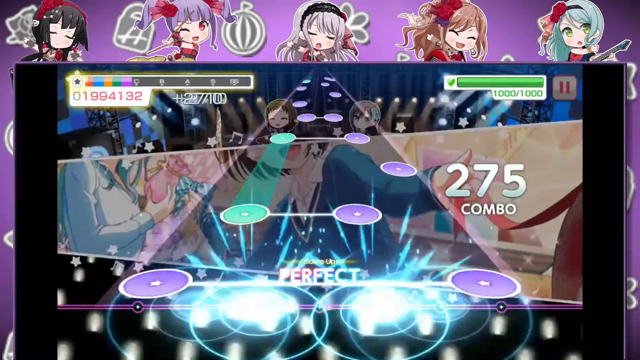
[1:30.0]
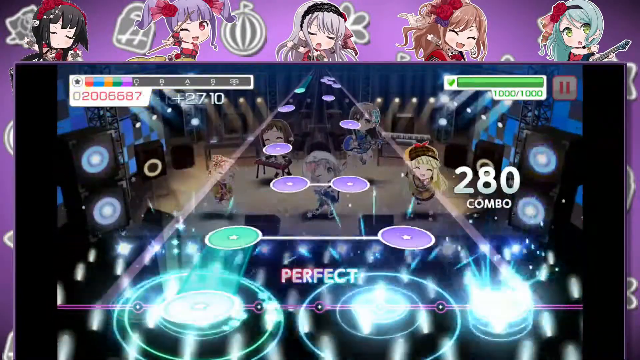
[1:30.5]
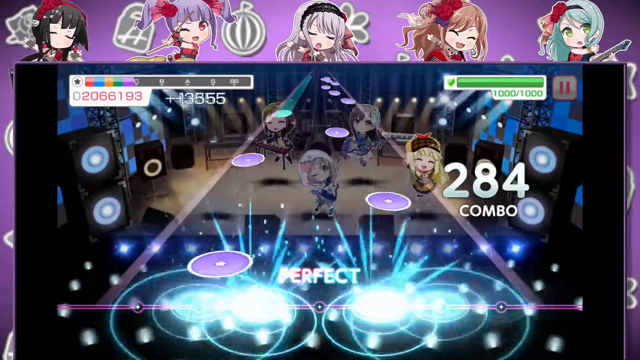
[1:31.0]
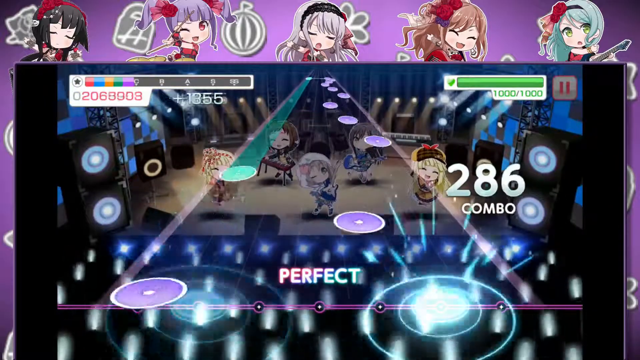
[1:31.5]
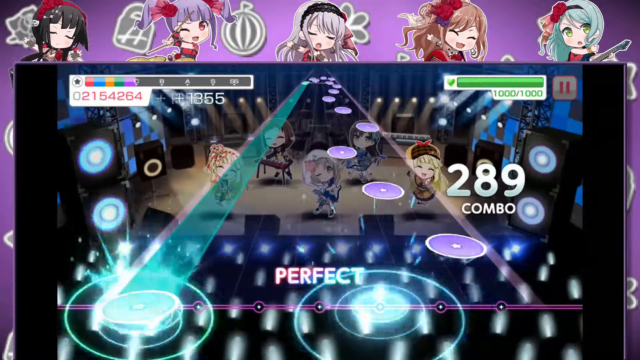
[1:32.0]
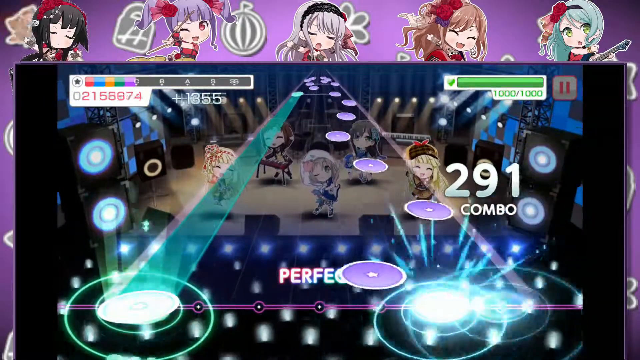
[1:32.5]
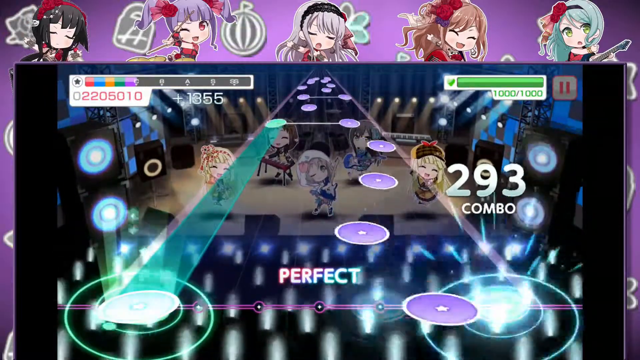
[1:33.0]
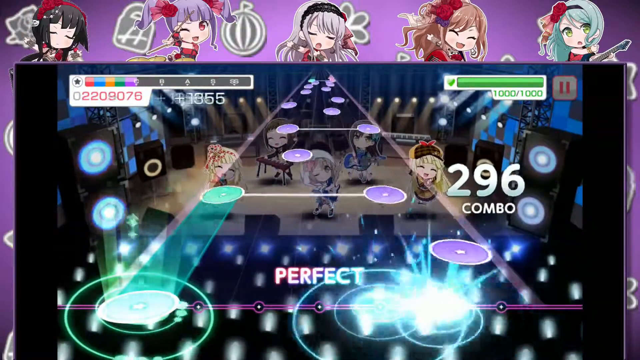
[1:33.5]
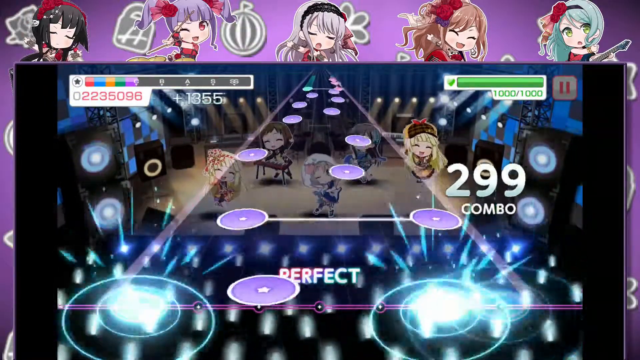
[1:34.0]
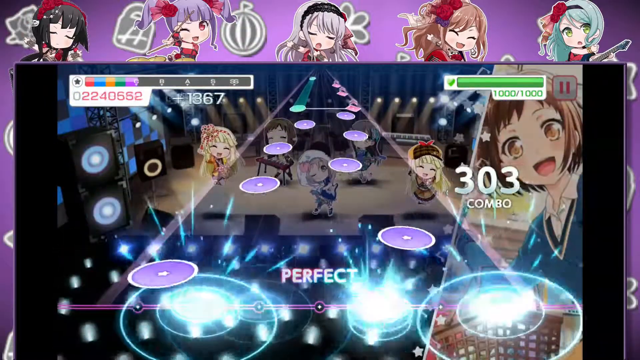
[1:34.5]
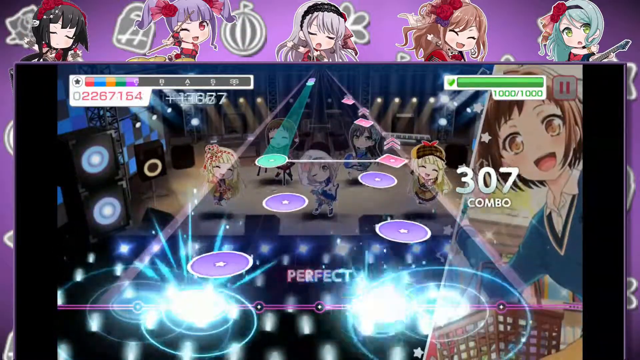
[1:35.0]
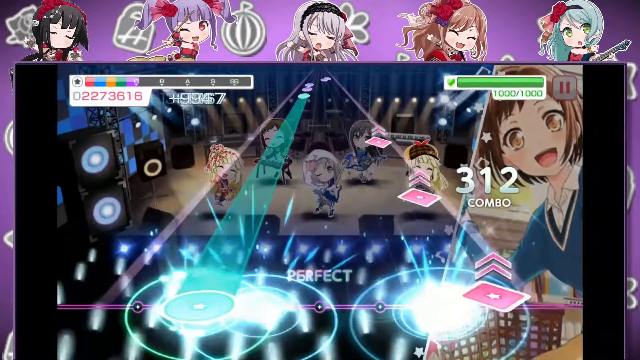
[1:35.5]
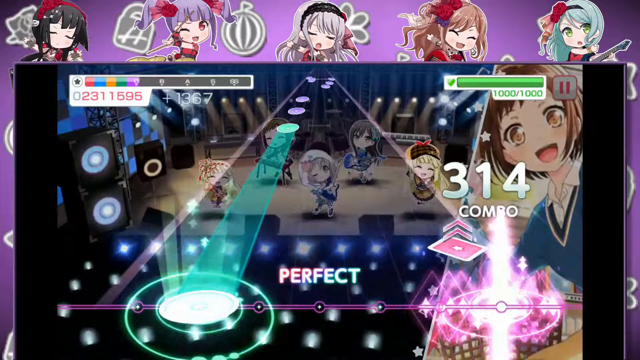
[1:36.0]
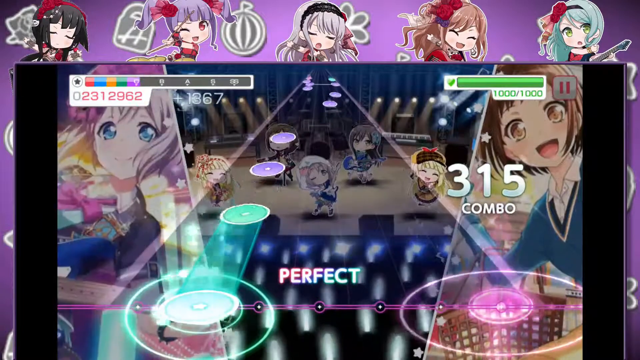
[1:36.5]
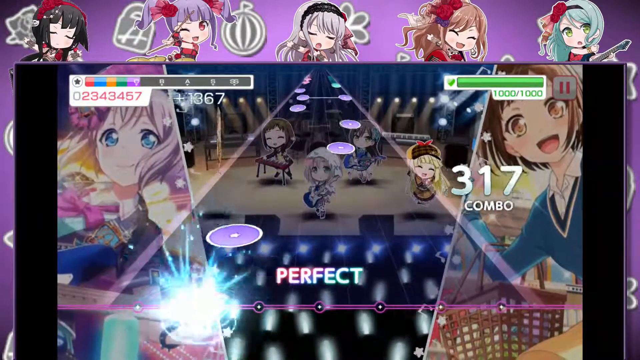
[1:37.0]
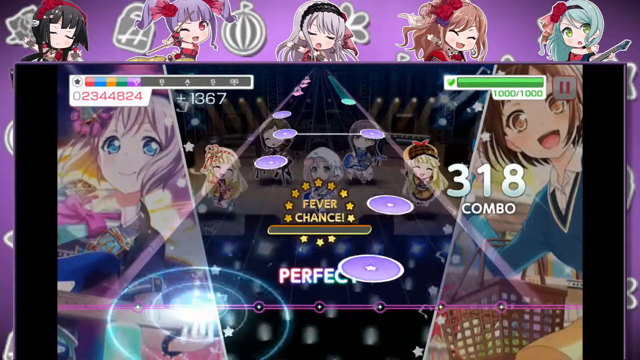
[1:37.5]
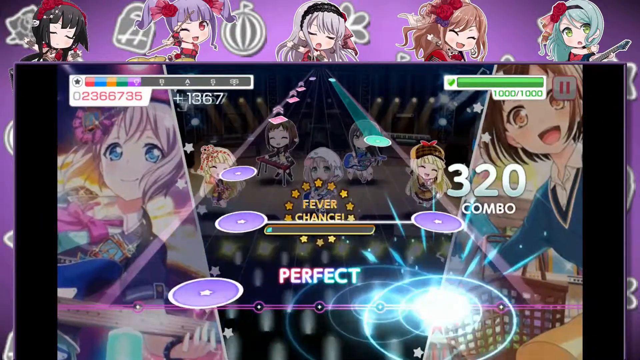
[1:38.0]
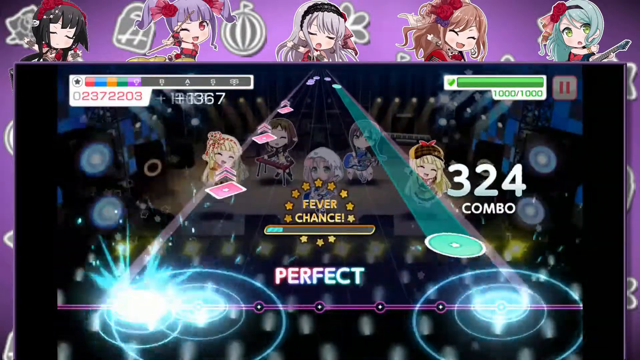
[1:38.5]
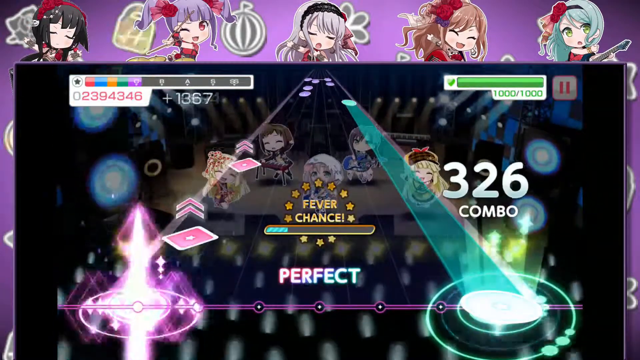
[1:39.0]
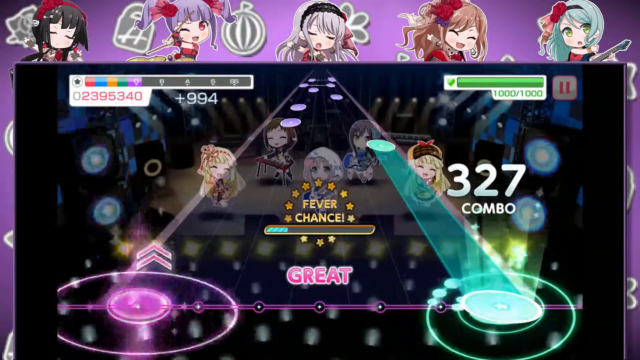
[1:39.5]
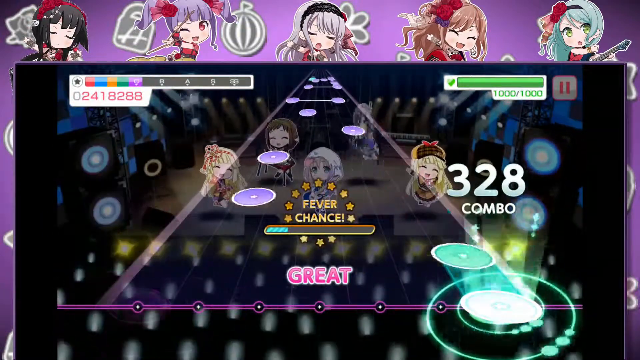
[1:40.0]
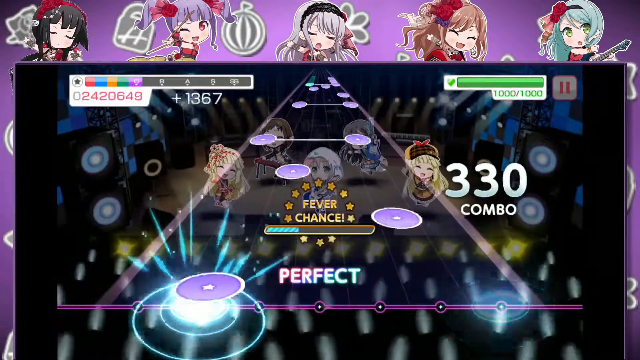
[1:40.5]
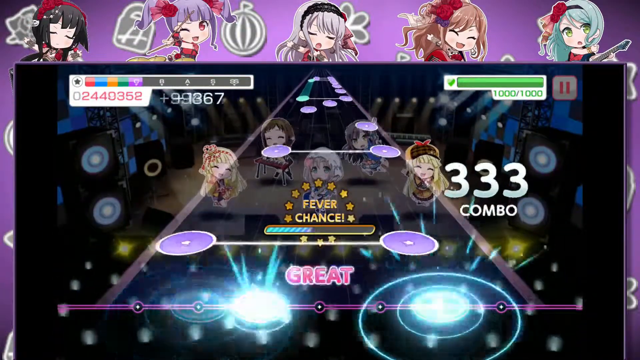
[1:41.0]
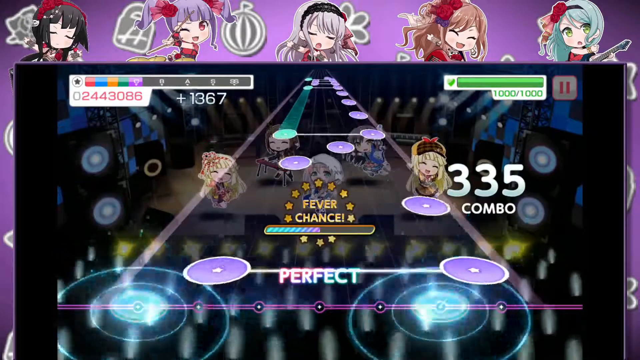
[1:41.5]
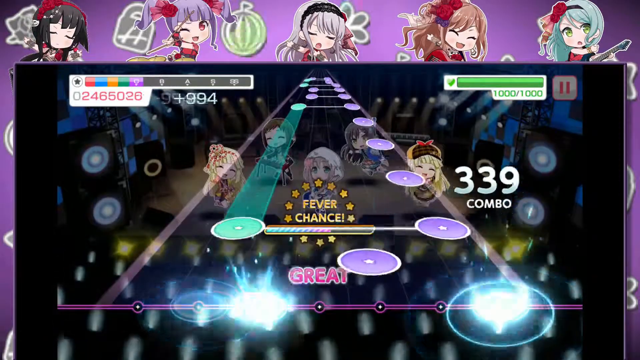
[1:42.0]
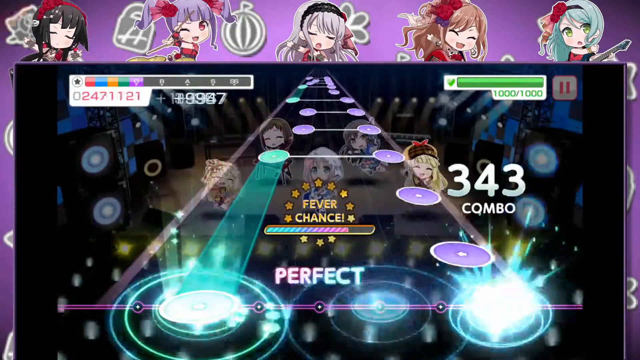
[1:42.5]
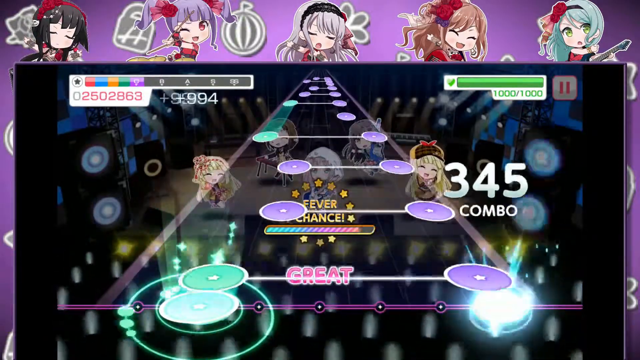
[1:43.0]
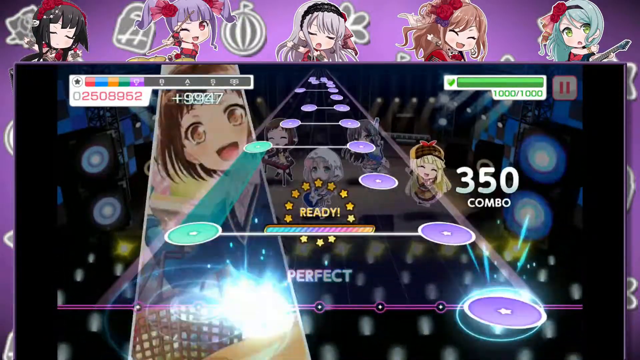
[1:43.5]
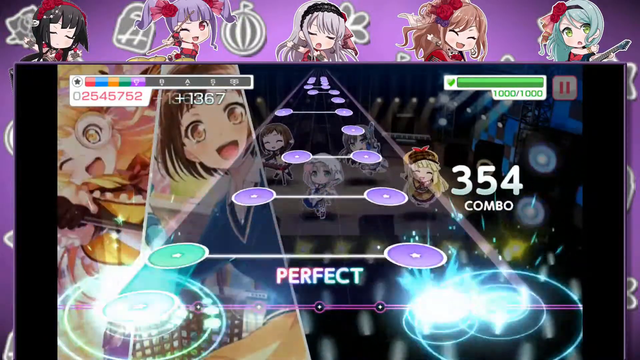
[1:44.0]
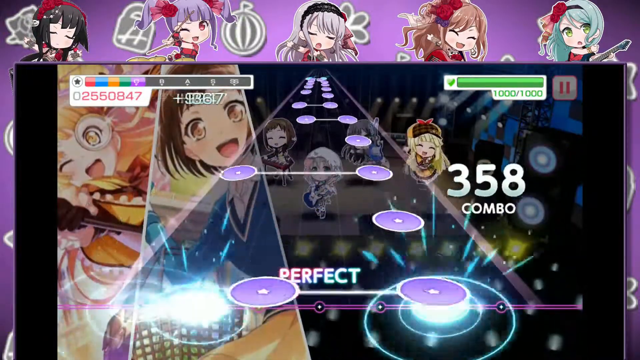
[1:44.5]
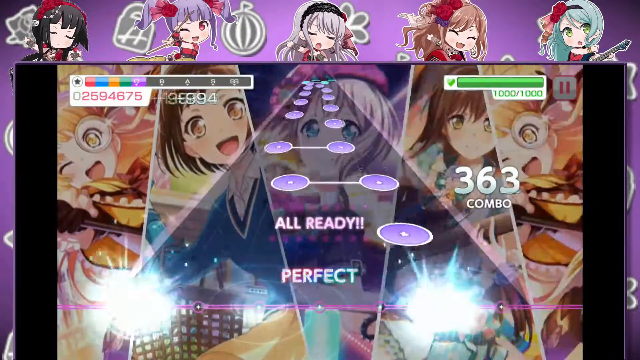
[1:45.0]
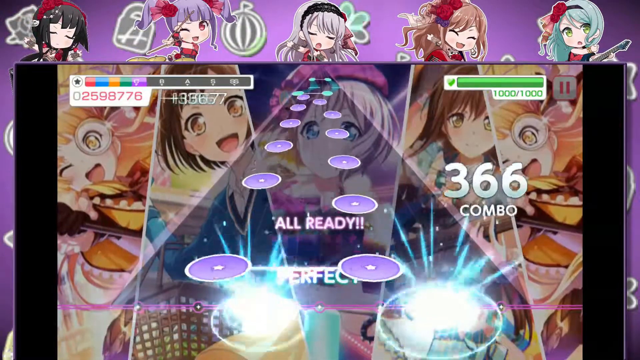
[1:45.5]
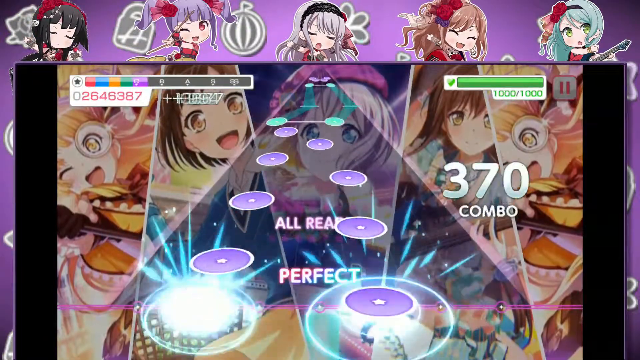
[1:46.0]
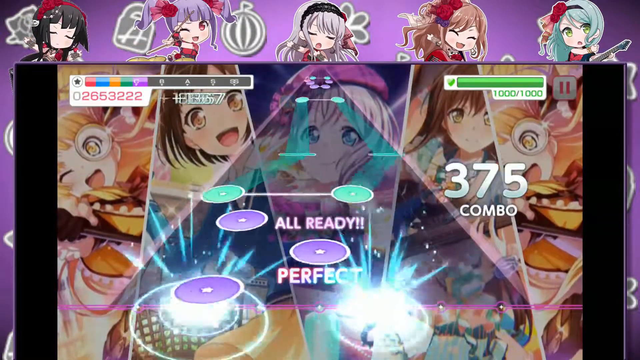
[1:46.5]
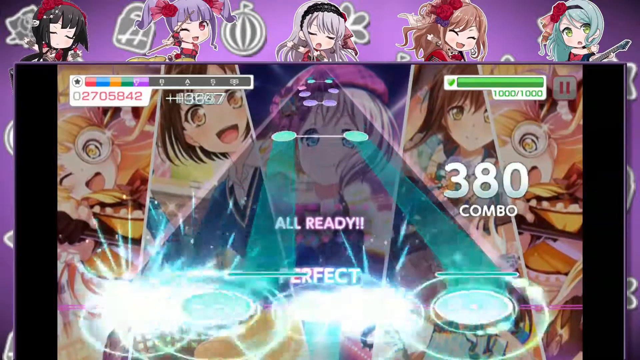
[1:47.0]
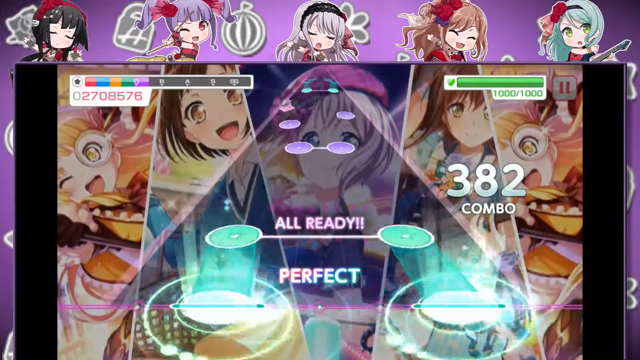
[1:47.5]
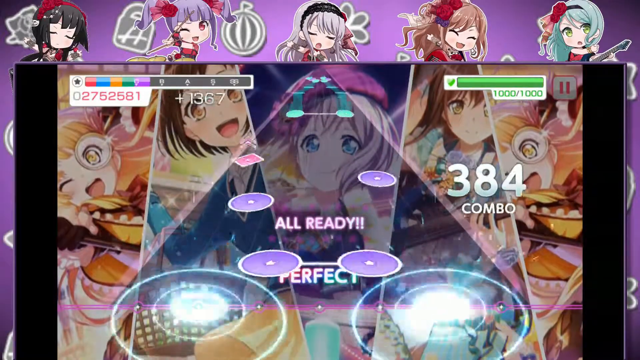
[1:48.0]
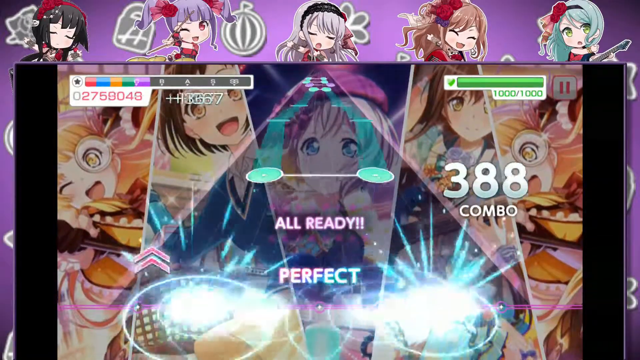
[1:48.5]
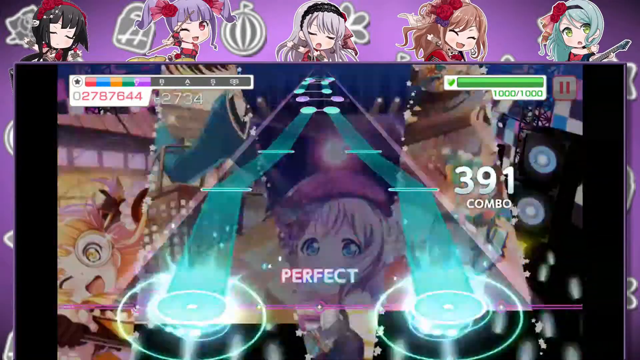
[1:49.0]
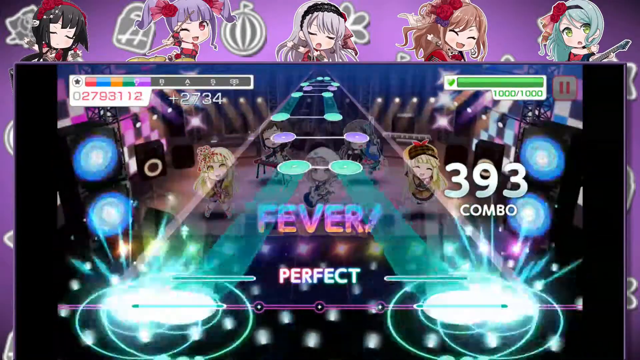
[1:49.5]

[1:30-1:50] A mobile video game is playing on a phone. It looks like a rhythm game: buttons of different colors travel along the shape of a guitar, and when they reach the bottom of the screen they light up, and text based on how precisely the button is pressed appears as either "perfect" or "great". As the game progresses, the words "Fever Chance" appear in the middle of the screen, surrounded by stars. As the buttons are pressed with precision, "great" or "perfect" appears under a bar that keeps charging with a blue-violet color. Once the bar is full, various cut-ins of anime girls appear behind the guitar, filling the background of the screen; they soon disappear, and the word "Fever" in blue, purple and orange appears behind the guitar. The combo continues as the buttons light up.